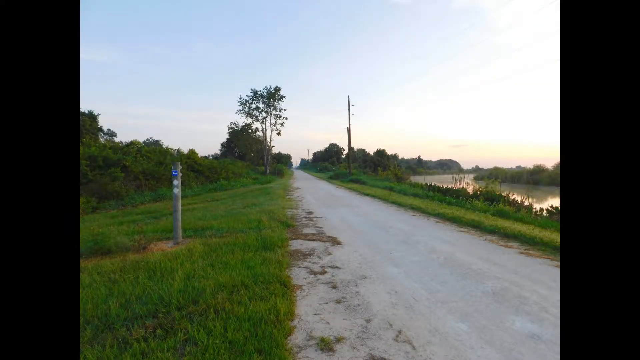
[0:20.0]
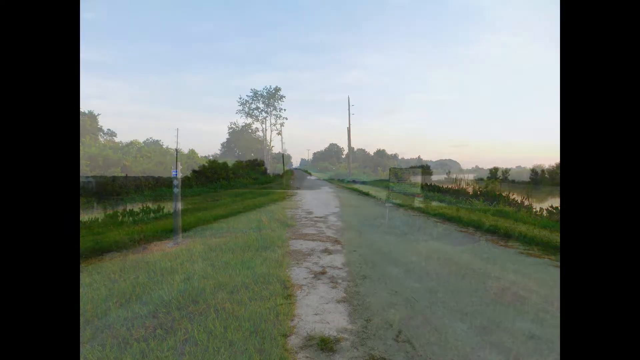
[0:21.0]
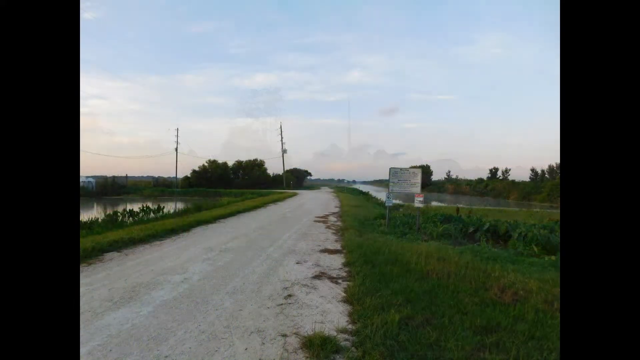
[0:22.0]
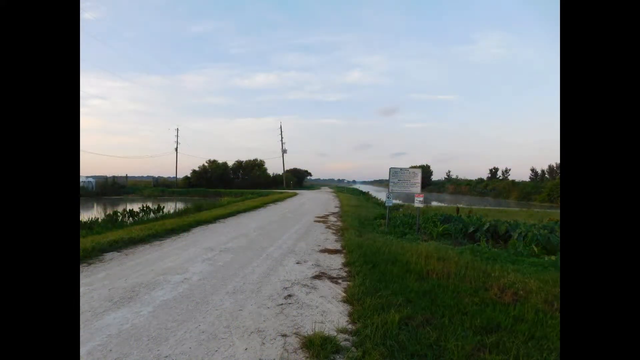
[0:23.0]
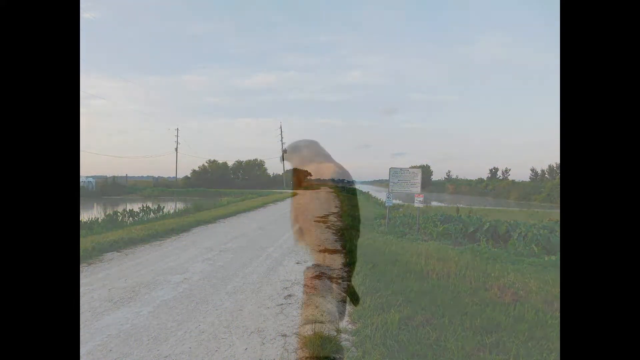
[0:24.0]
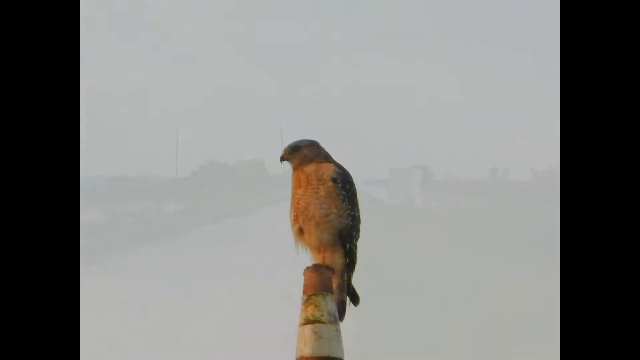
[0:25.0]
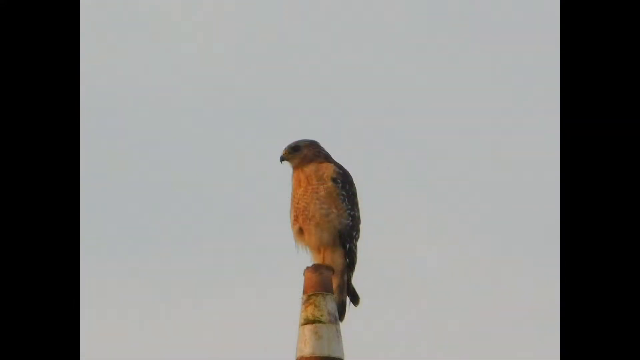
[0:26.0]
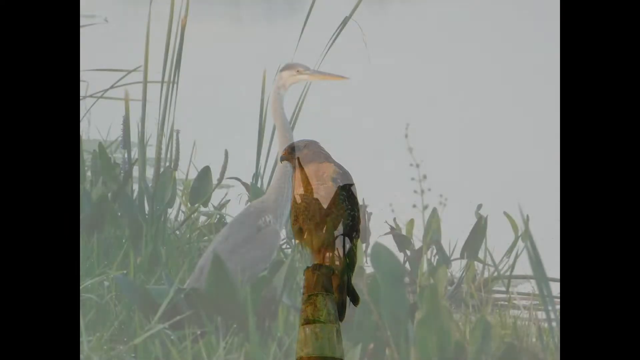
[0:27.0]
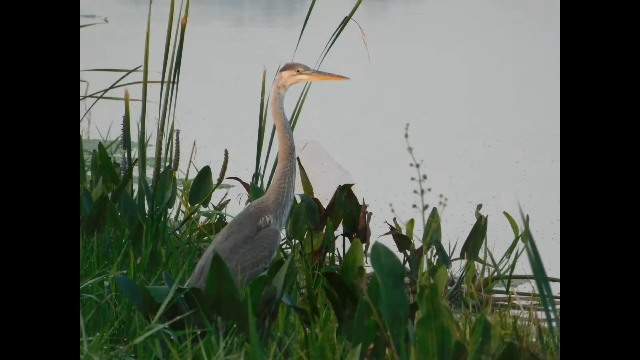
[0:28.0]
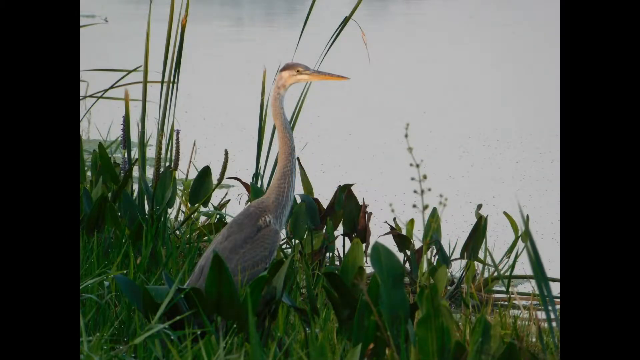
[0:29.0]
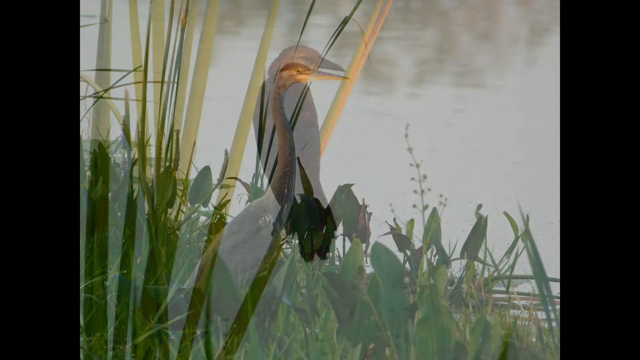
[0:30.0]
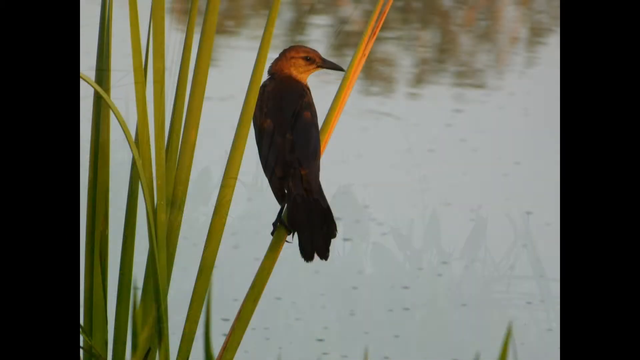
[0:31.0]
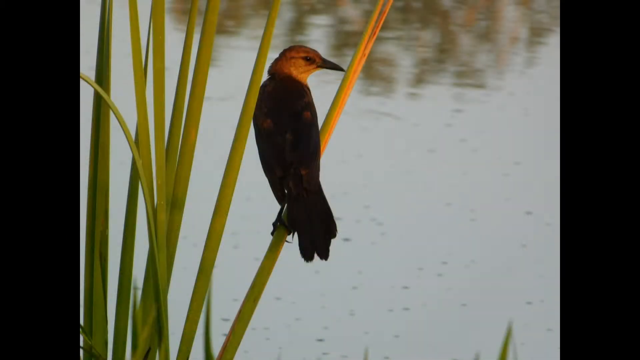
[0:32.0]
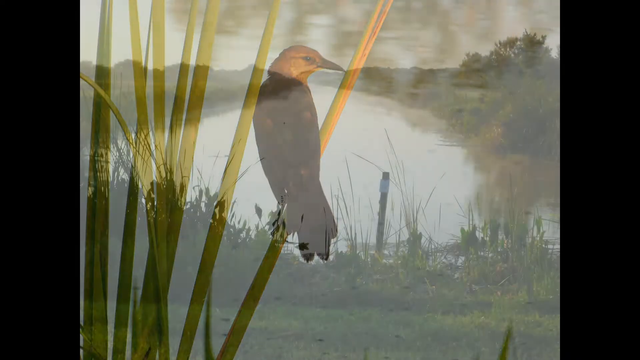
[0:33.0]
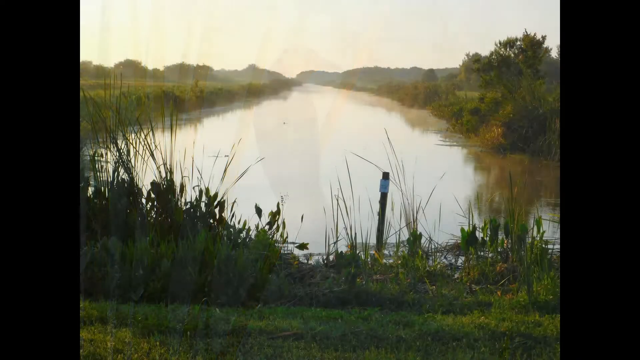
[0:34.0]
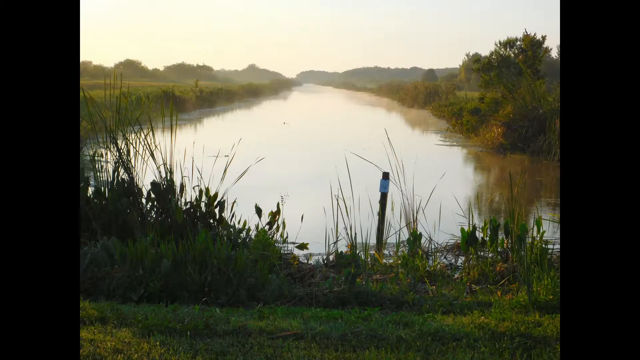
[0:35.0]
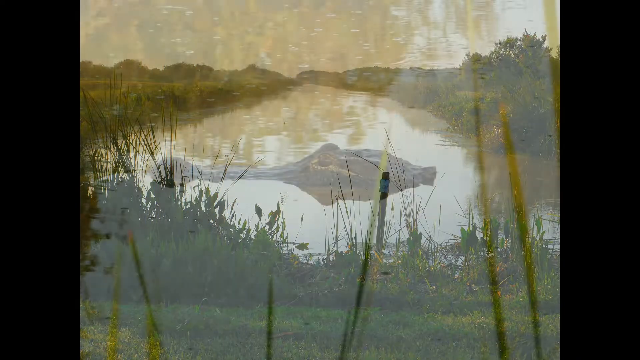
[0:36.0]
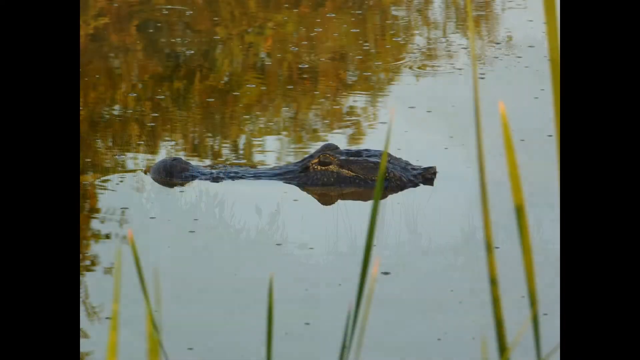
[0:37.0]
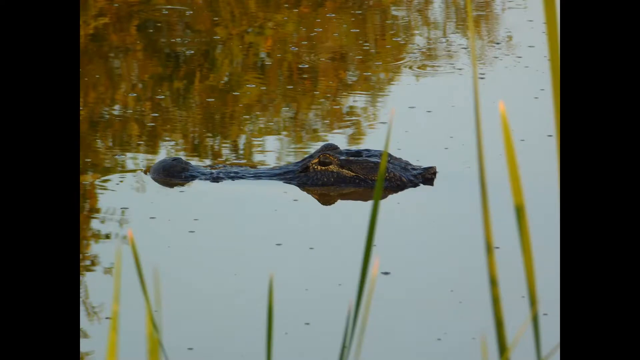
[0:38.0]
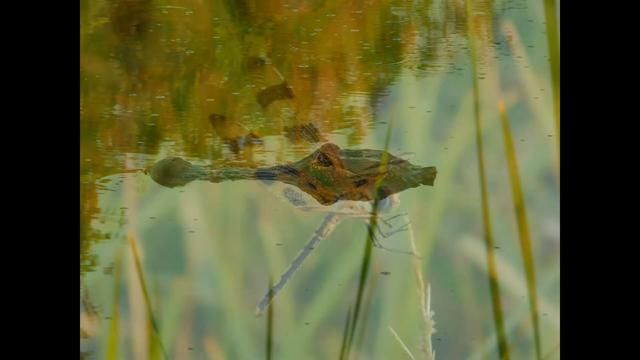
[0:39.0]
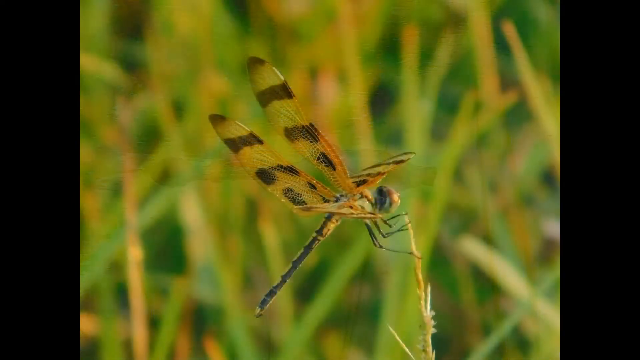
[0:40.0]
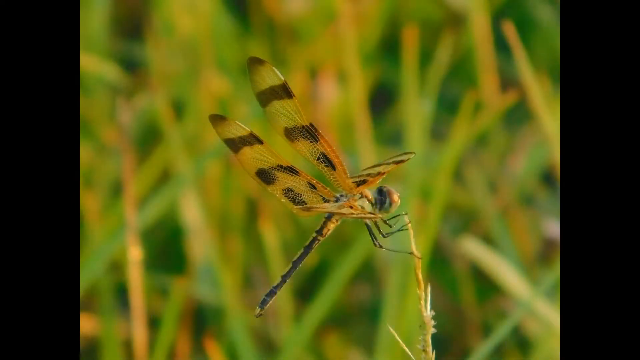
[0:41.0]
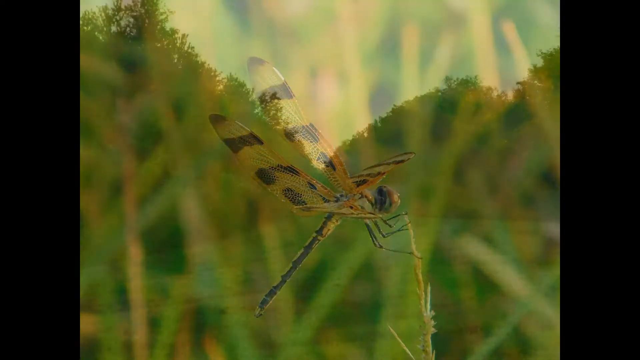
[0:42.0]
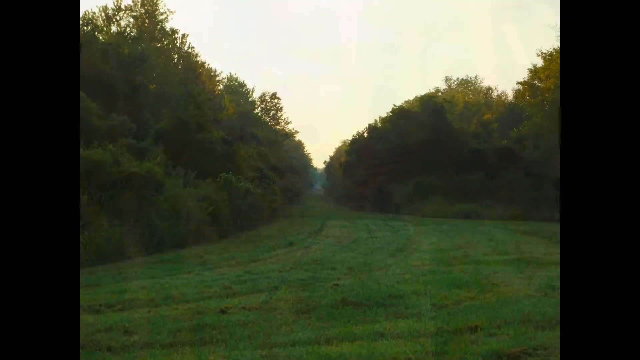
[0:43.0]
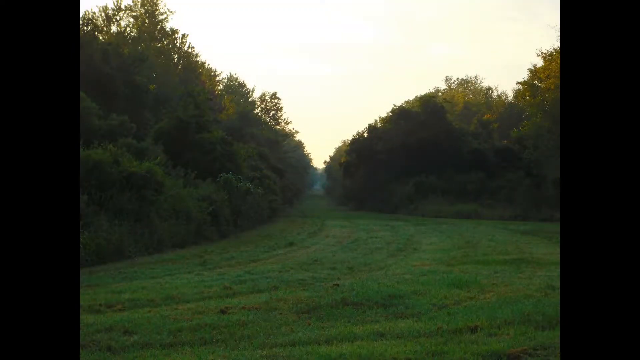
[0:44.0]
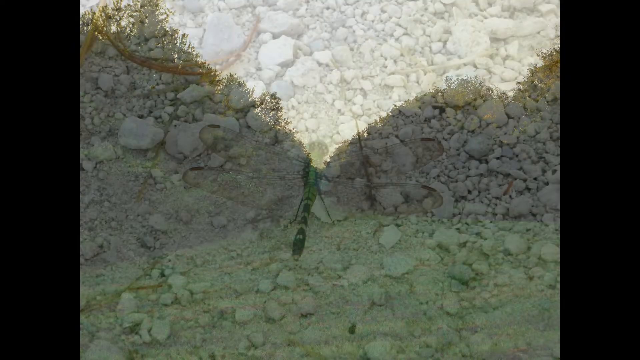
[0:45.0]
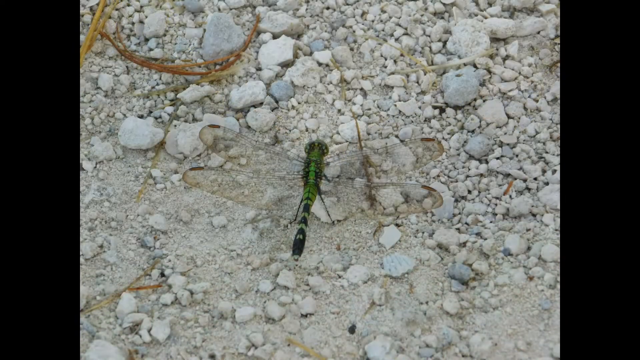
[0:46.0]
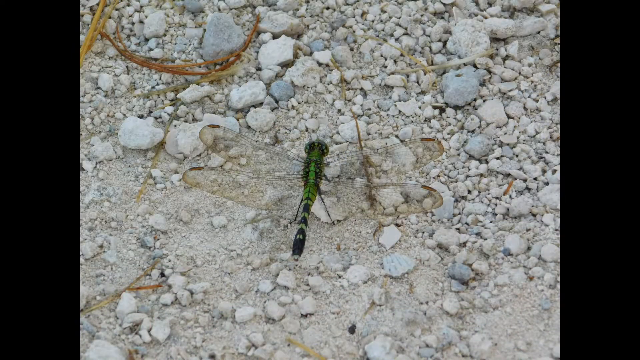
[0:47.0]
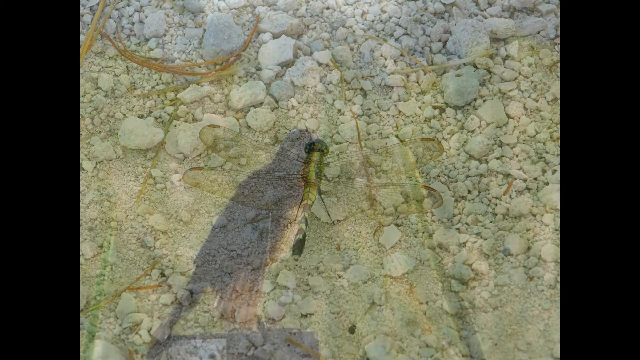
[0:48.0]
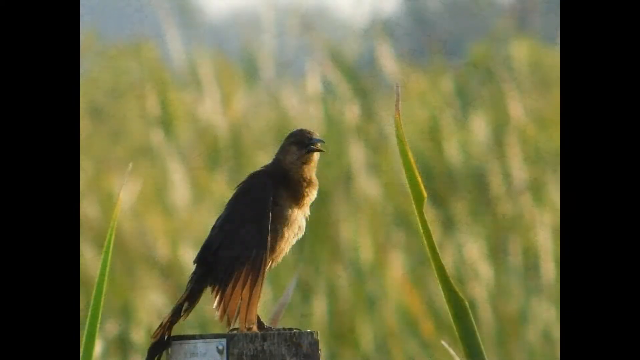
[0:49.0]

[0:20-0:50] A series of photos plays. The first is a white gravel country road with greenery on either side. Next is a peregrine falcon or some other kind of falcon sitting atop a post, with the setting sun hitting its chest. Then a great blue heron or some sort of crane walks through greenery against a cloudy gray background. A medium-sized bird is perched on a reed by the edge of the water. Next is a canal or long, skinny lake surrounded by lush greenery and bathed in golden sunlight, followed by just the top of an alligator's or crocodile's head as it surfaces from the water. A close-up shows a dragonfly with black striped wings, then a green field, and then another dragonfly, this time with transparent wings.